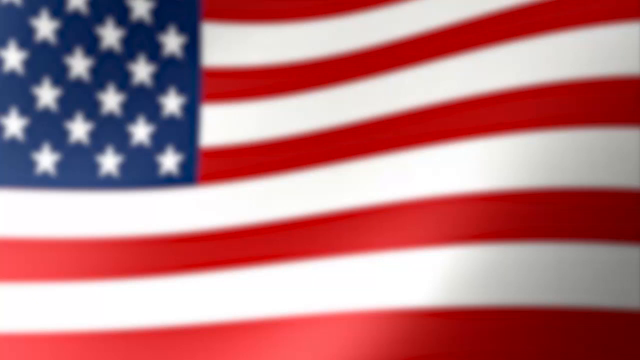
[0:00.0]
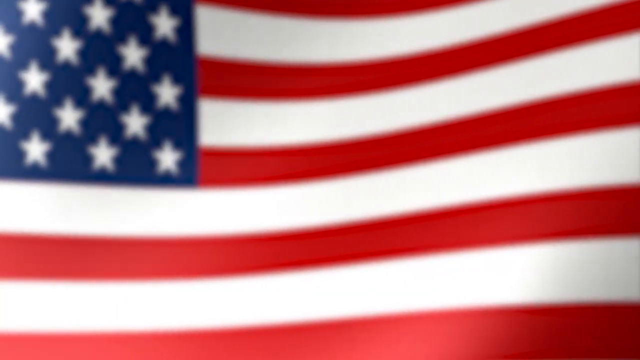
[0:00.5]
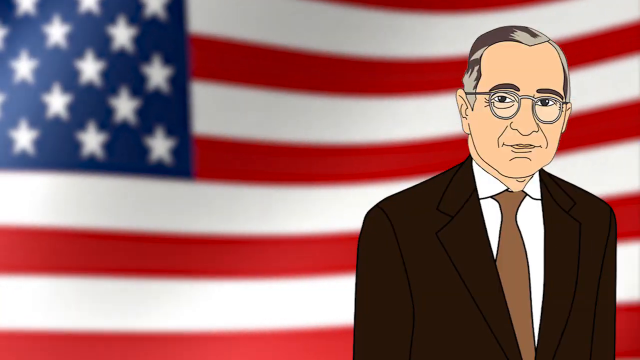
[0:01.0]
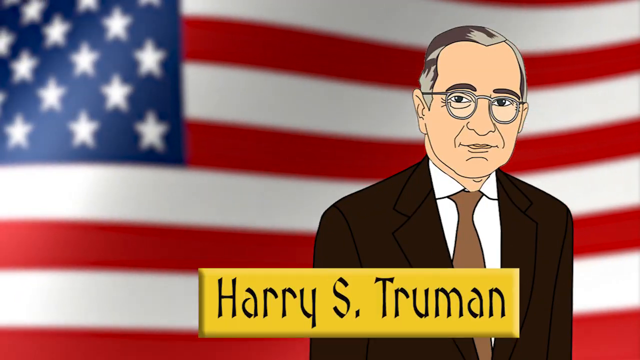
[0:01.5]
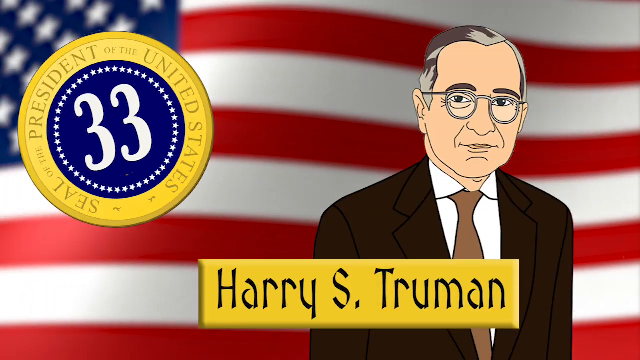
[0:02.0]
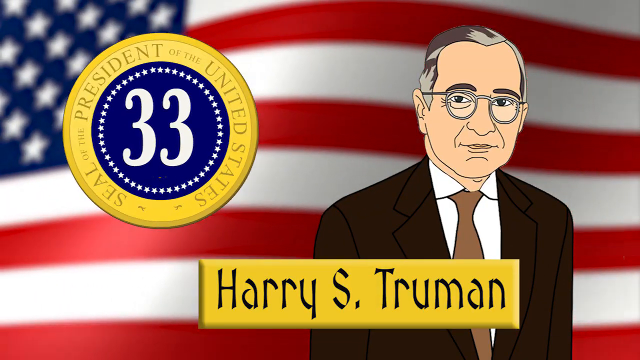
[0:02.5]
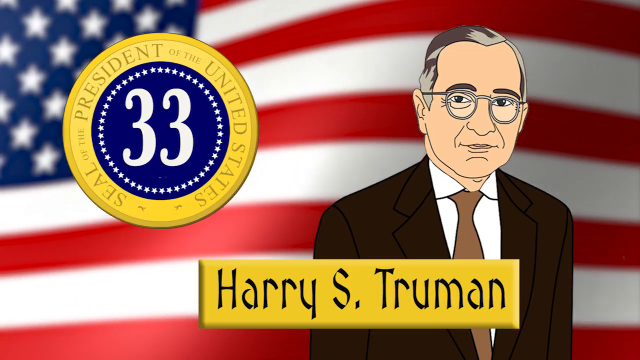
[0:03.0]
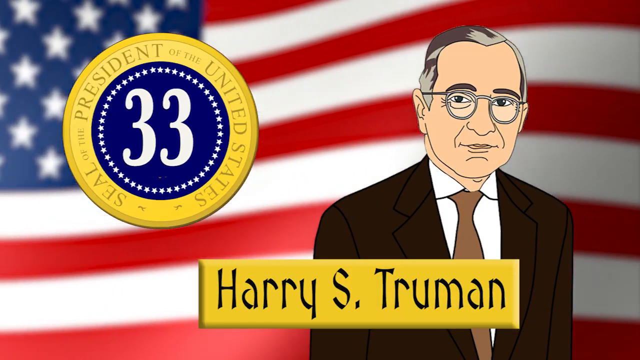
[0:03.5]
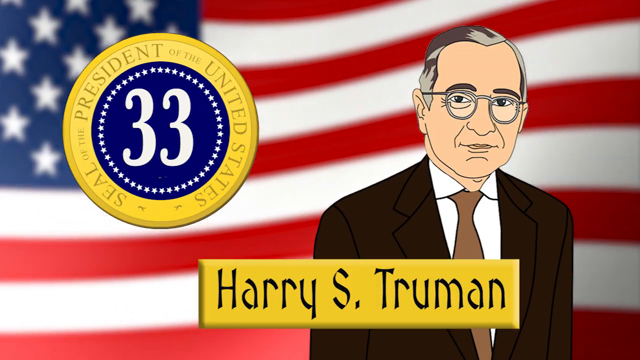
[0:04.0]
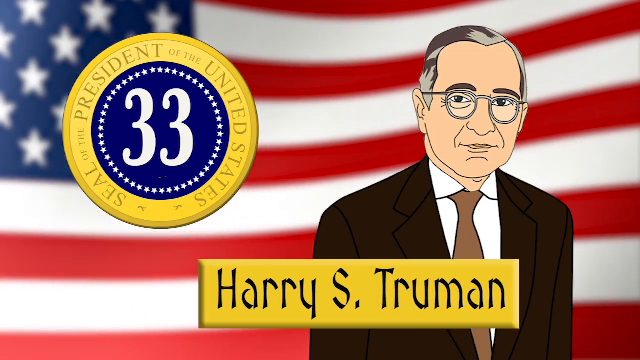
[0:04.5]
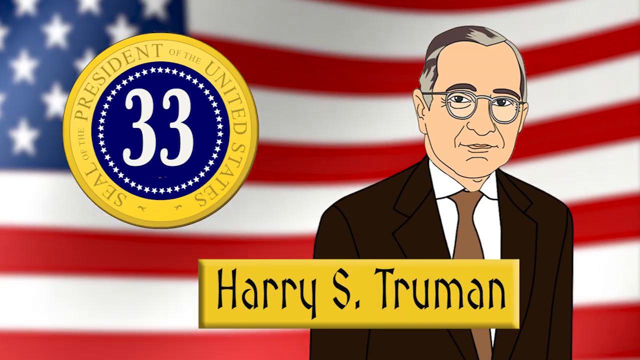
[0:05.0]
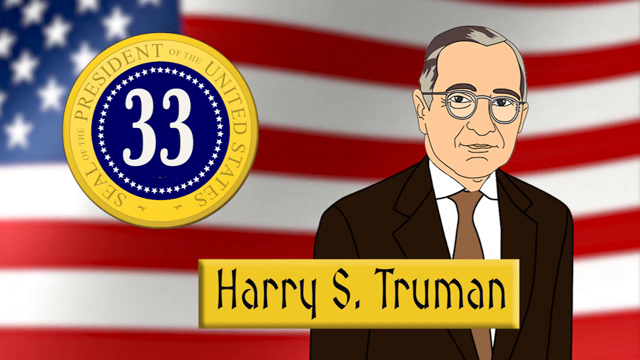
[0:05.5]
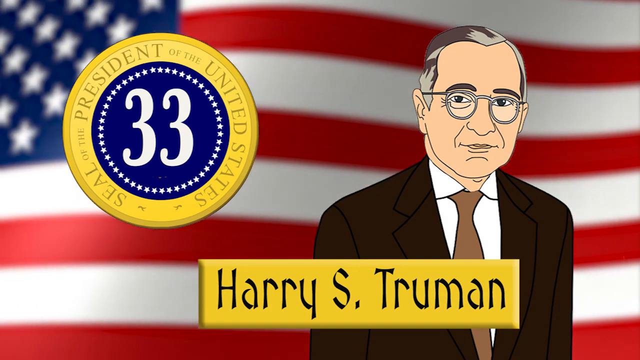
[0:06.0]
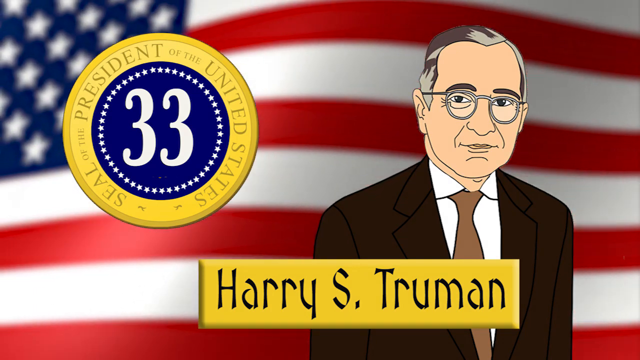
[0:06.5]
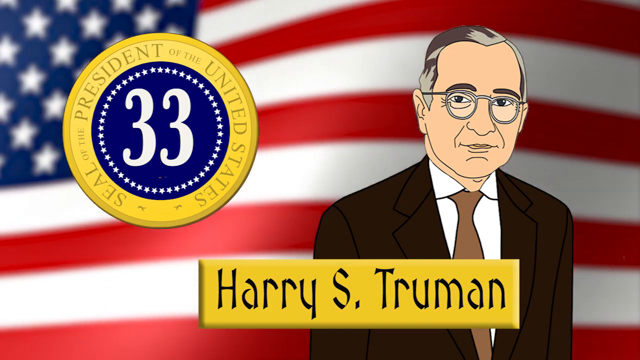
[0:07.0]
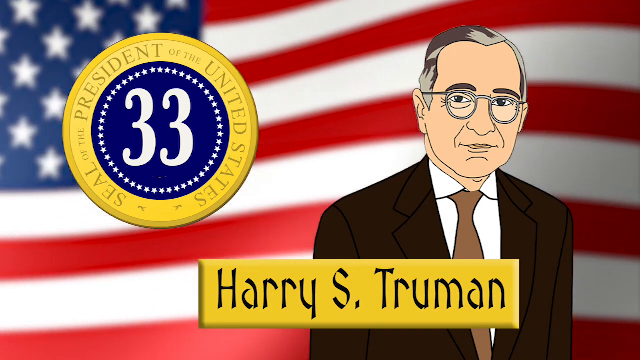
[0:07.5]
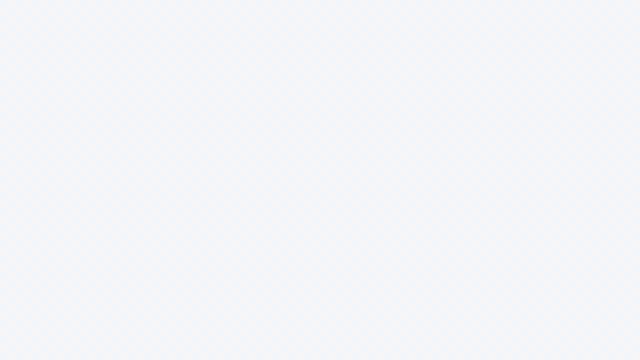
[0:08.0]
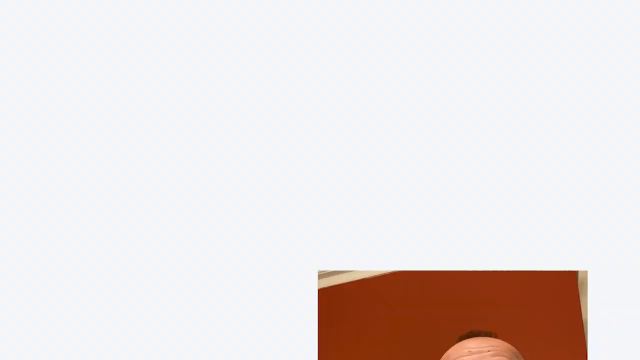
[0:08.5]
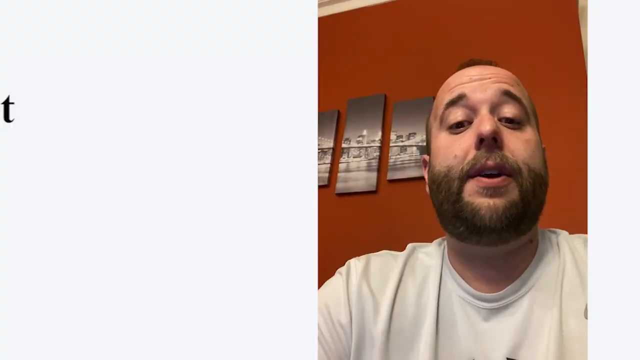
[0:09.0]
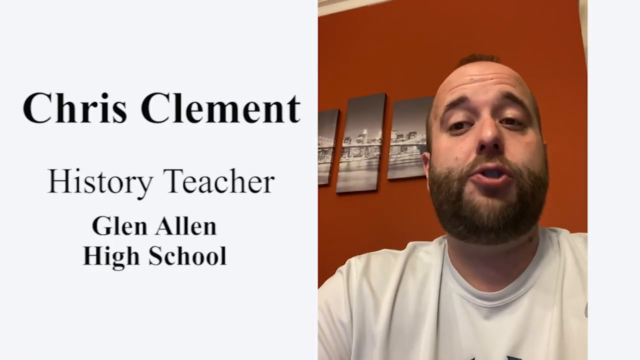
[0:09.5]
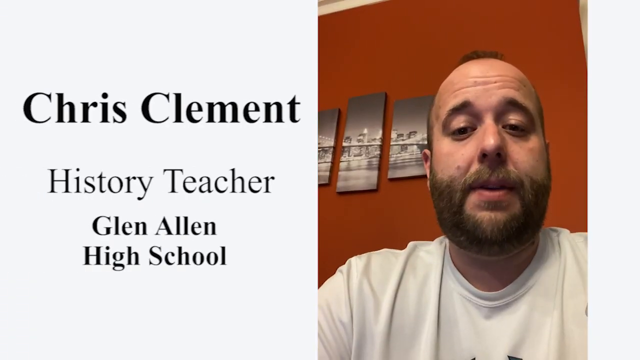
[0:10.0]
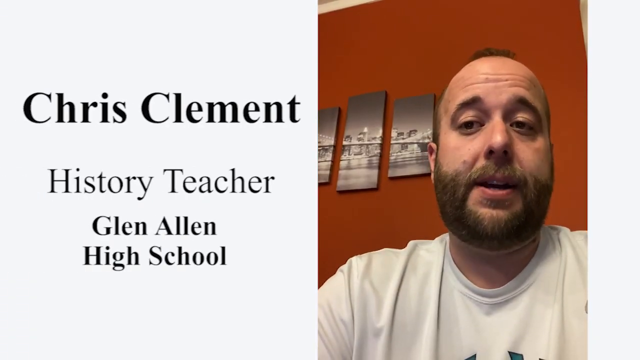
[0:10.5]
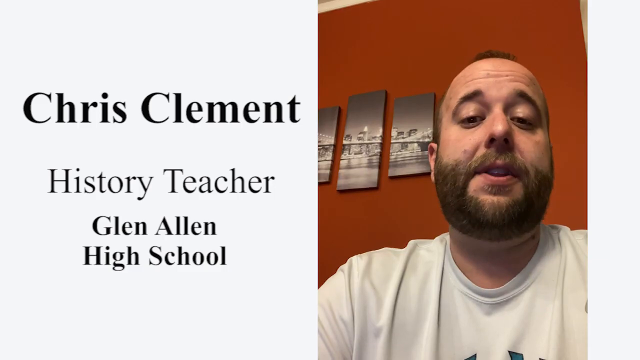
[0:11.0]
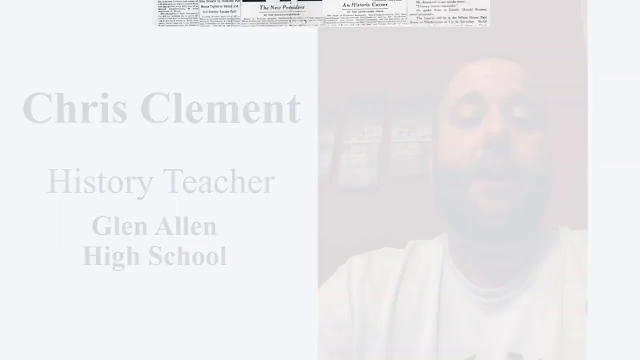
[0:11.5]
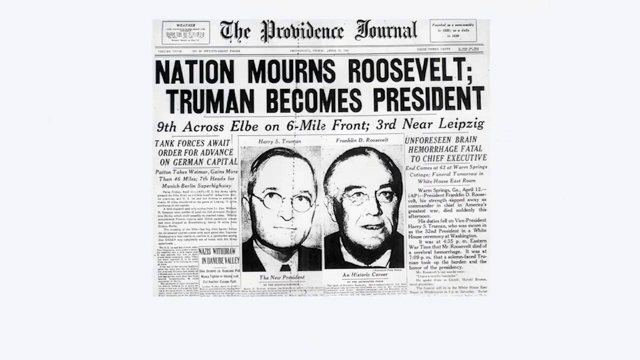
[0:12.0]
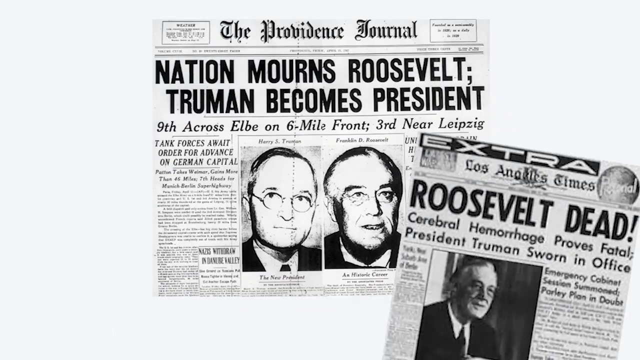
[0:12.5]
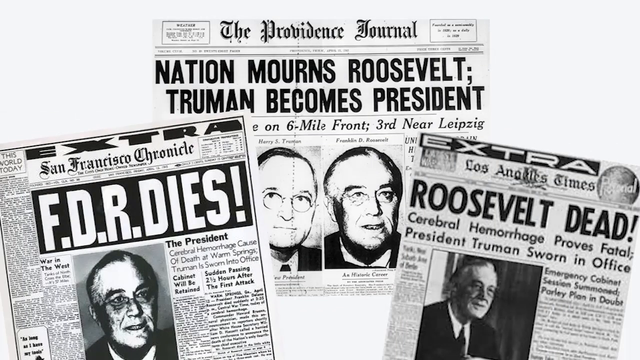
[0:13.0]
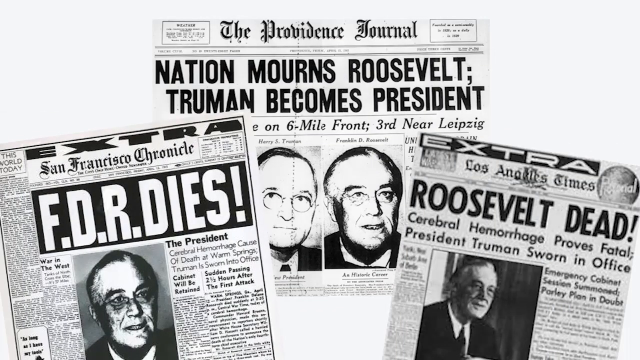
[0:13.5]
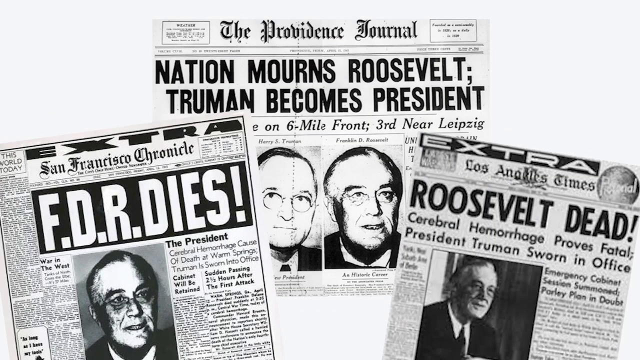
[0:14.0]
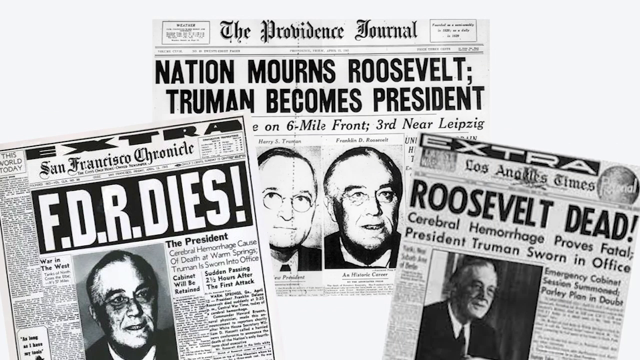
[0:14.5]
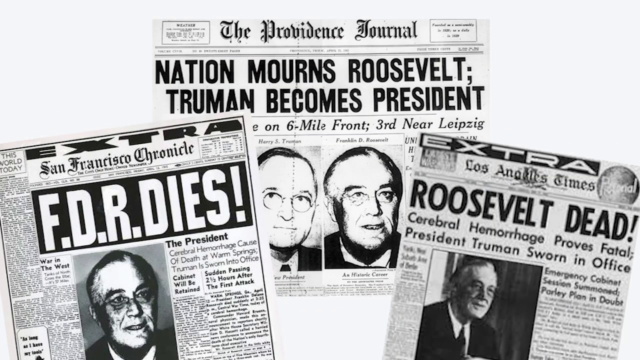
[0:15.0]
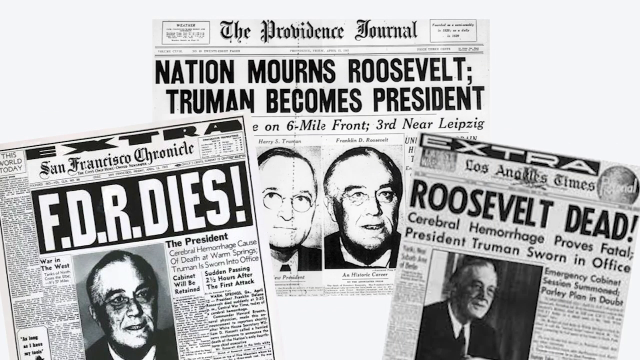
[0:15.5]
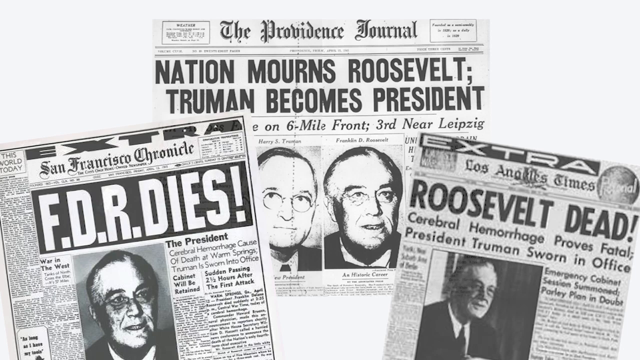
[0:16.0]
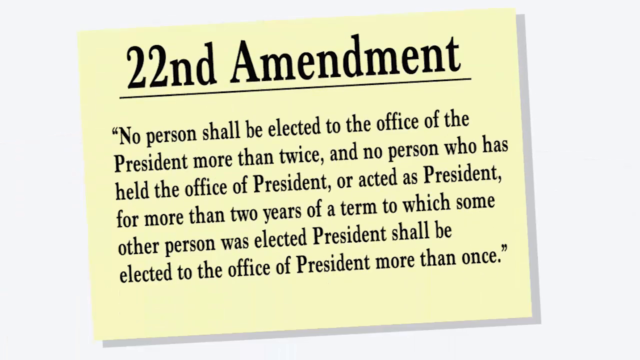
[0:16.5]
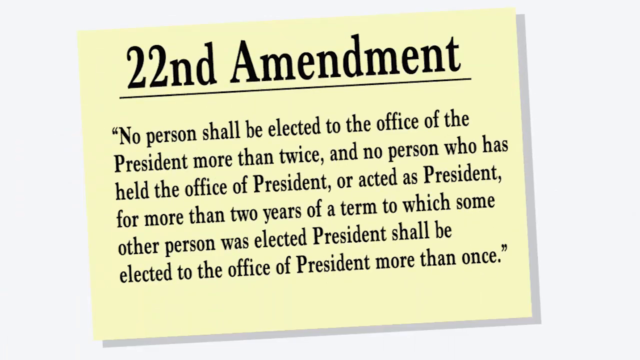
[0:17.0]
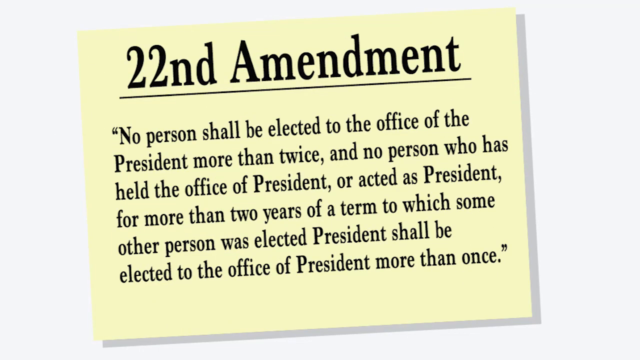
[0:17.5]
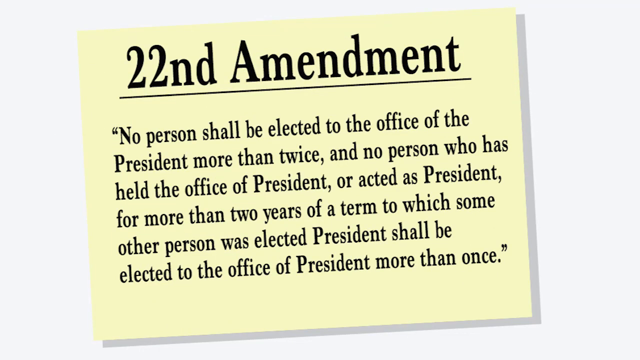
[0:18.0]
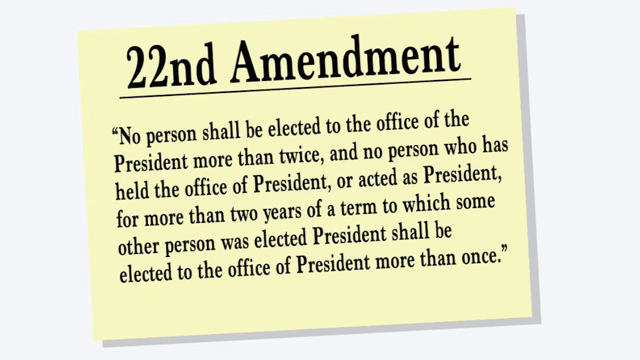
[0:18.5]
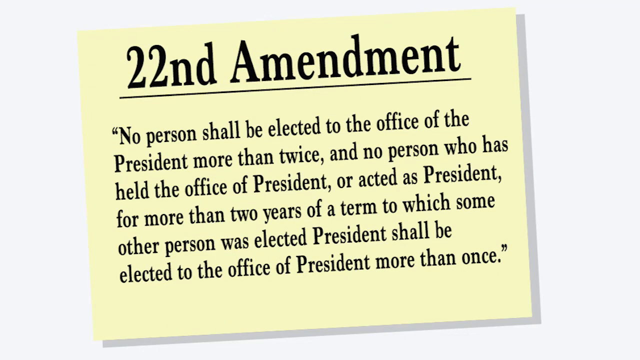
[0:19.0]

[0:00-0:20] The video appears to be about former President Harry S. Truman. It opens on a slightly out-of-focus American flag waving and undulating; it looks like an animated GIF, and the flag is kind of zoomed in so it is not entirely visible. Soon a cartoon image of Truman comes in from the right, with a nameplate just below him reading "Harry S. Truman" in black text on a gold background. From the left comes a presidential seal that has the number 33 in the center instead of the traditional eagle. In the drawing, Truman wears a brown tie, a black suit jacket, a white shirt and glasses. The flag waves behind him for a few seconds, then all the images disappear, the flag goes away and the screen turns white. Chris Clement, a history teacher at George Allen High School, is introduced, with video of him on the right side of the screen. It looks very much like he is recording from a laptop, shot from a somewhat downward angle. He is probably in his 30s or 40s, wears a white t-shirt, has a beard, and is talking. After a moment, an old newspaper comes in from the top reading "The Nation Mourns Roosevelt, Truman Becomes President," and others come in from the left and right, all newspapers announcing the death of Franklin Delano Roosevelt. The newspapers fade away and an image of the 22nd Amendment appears.